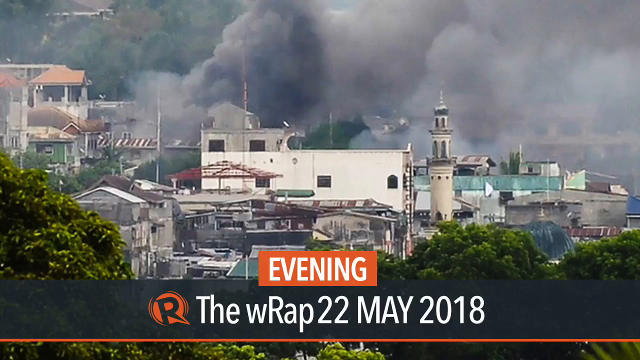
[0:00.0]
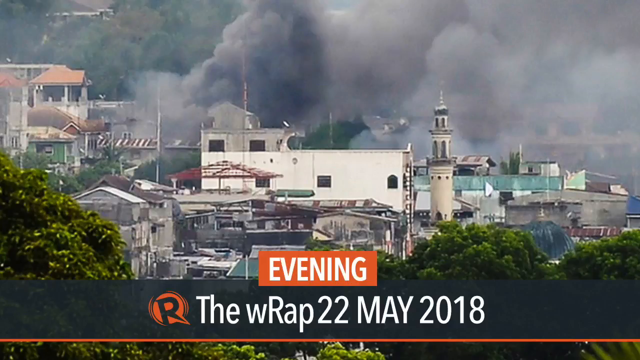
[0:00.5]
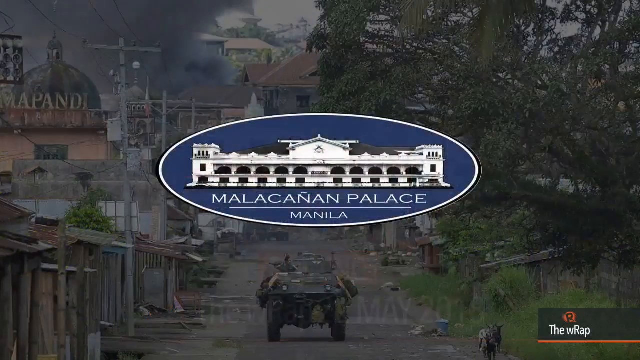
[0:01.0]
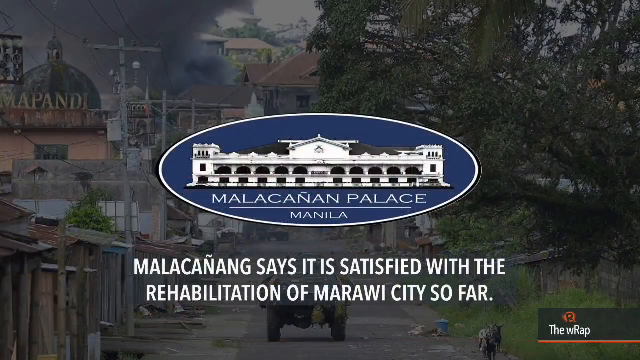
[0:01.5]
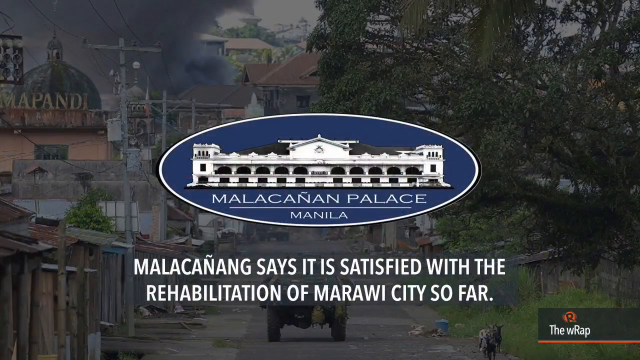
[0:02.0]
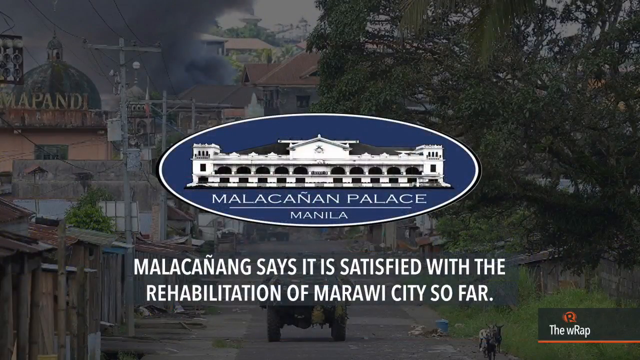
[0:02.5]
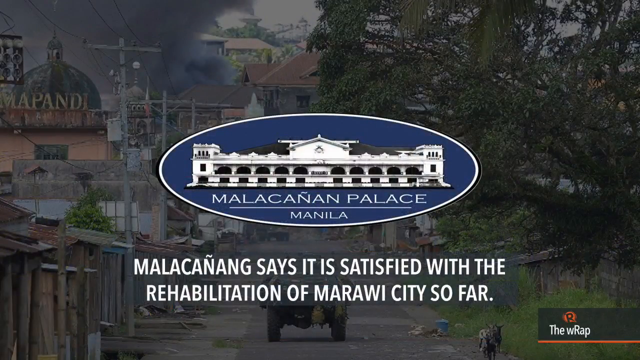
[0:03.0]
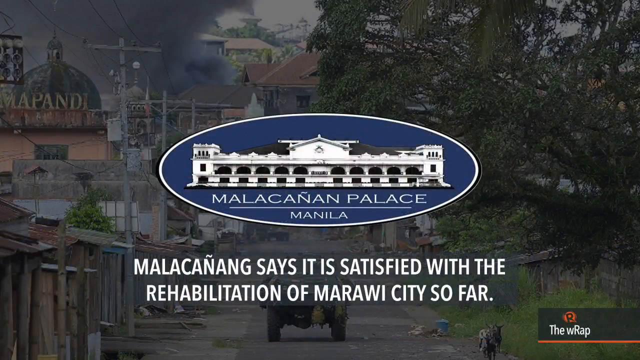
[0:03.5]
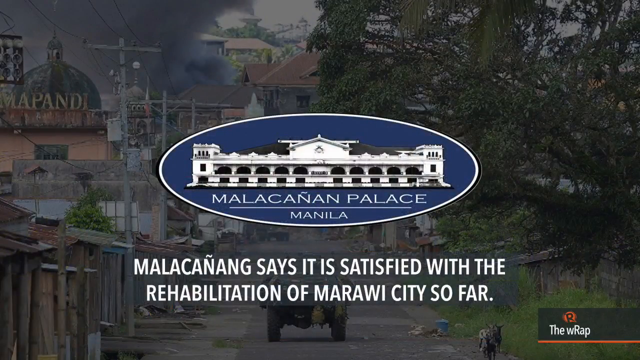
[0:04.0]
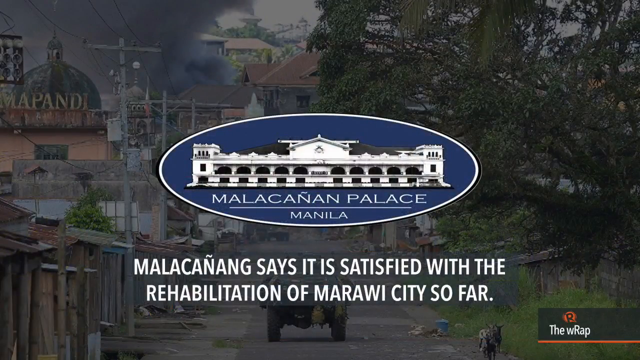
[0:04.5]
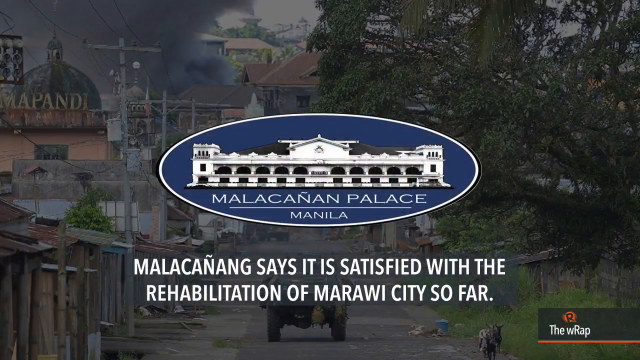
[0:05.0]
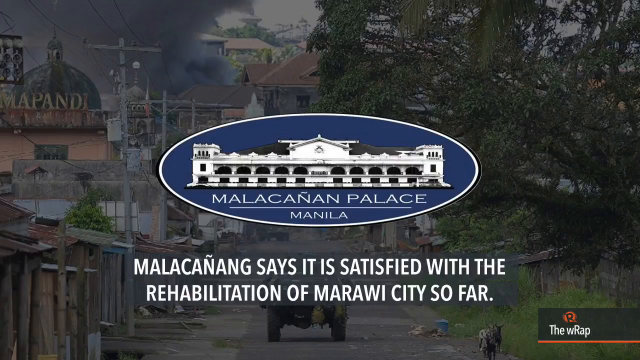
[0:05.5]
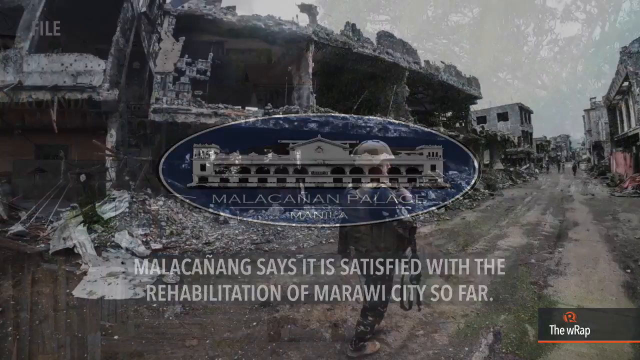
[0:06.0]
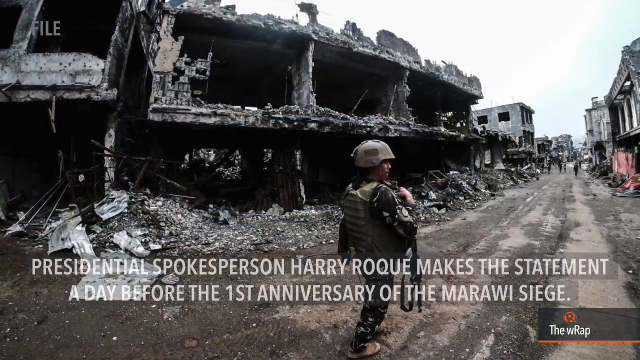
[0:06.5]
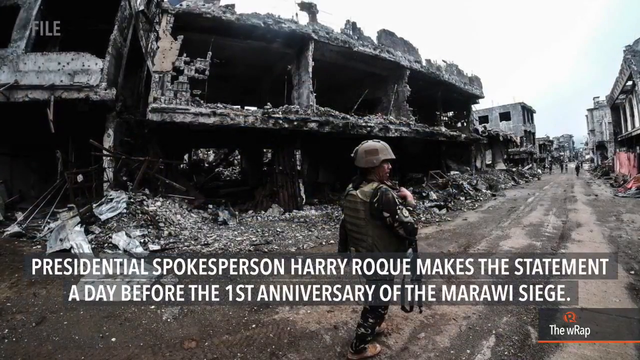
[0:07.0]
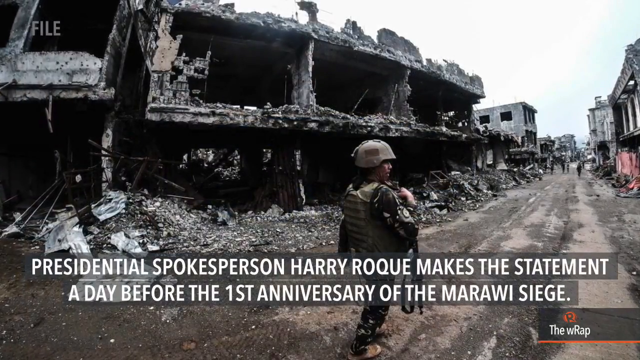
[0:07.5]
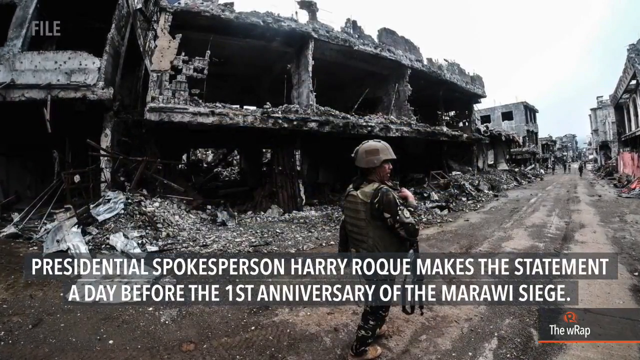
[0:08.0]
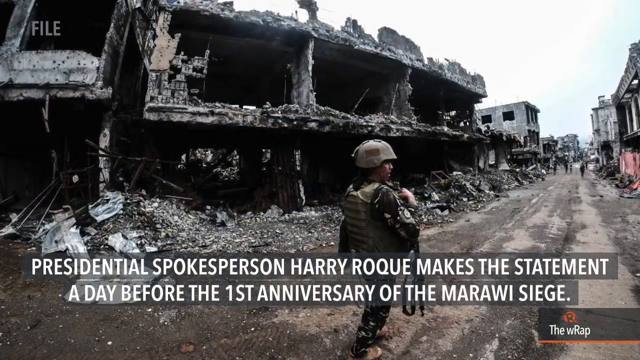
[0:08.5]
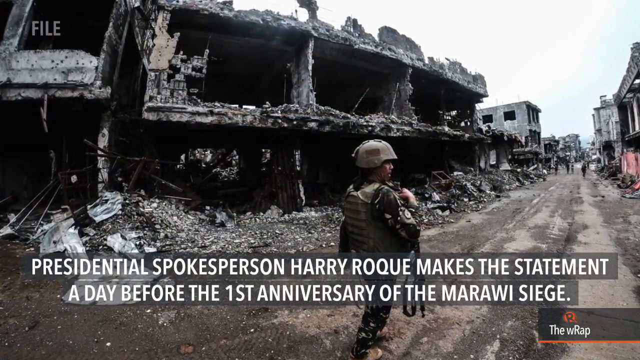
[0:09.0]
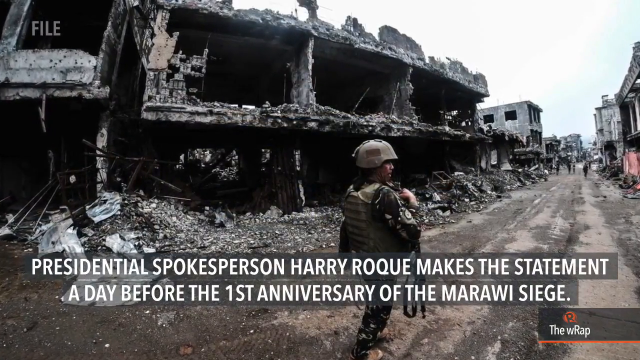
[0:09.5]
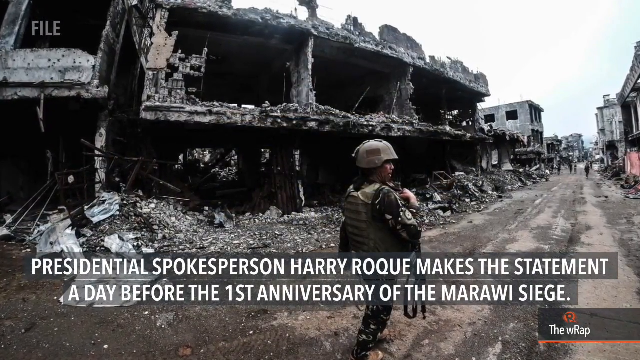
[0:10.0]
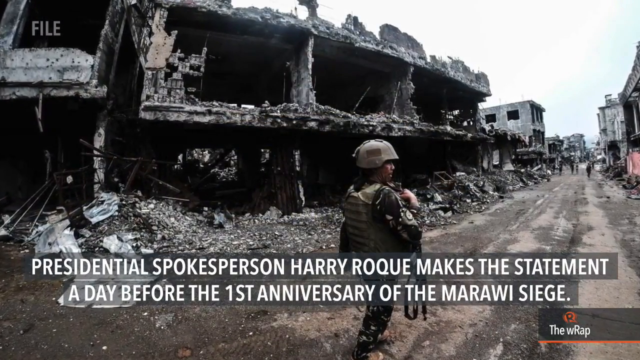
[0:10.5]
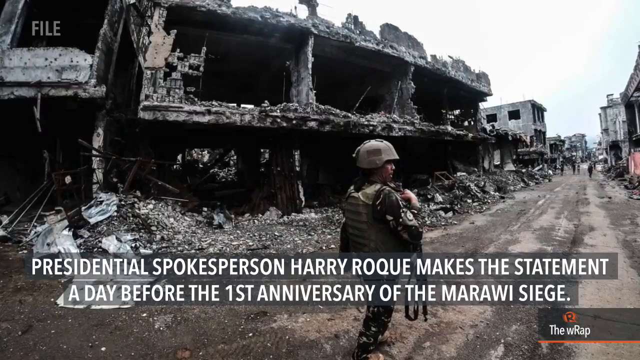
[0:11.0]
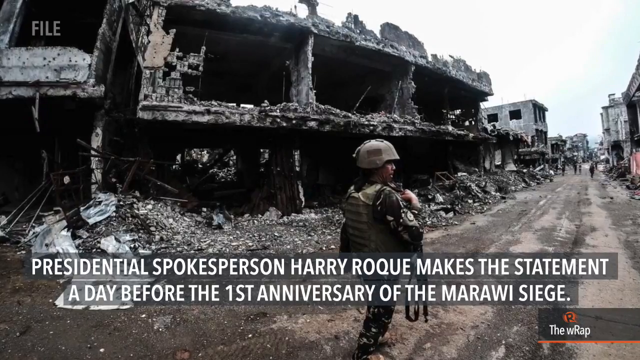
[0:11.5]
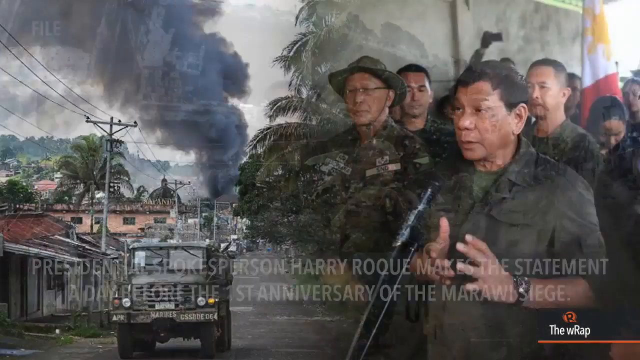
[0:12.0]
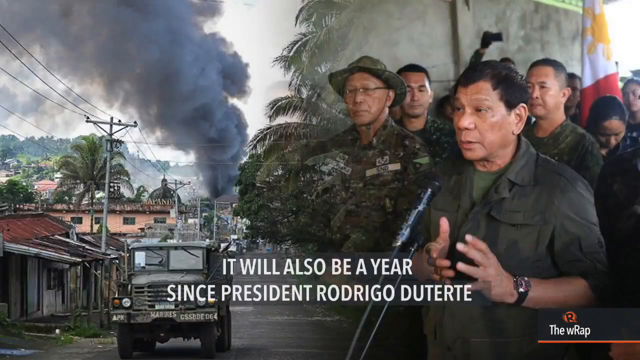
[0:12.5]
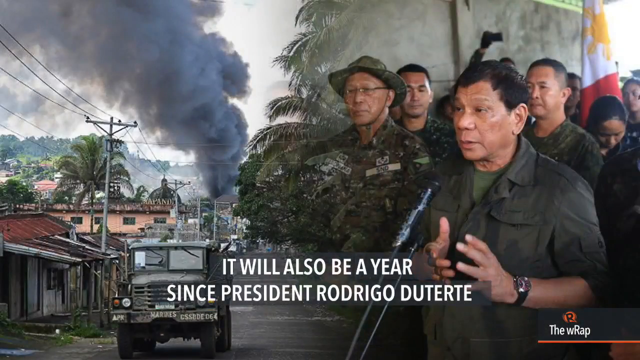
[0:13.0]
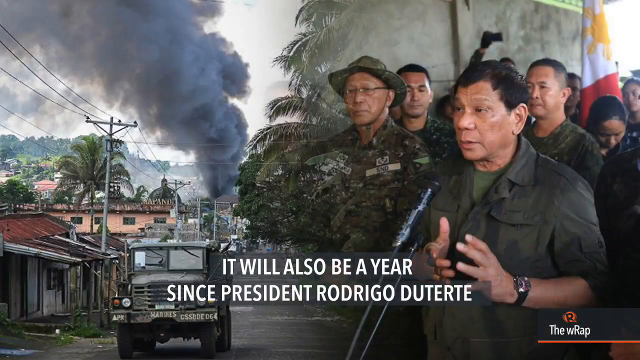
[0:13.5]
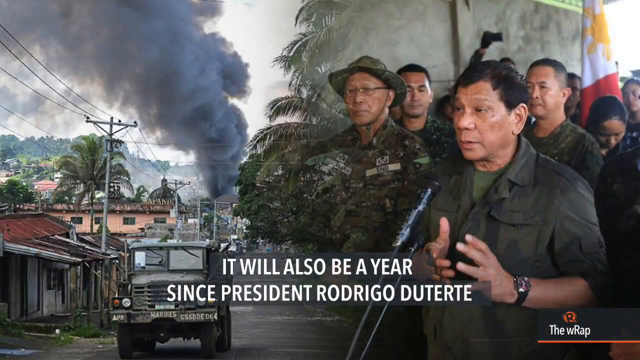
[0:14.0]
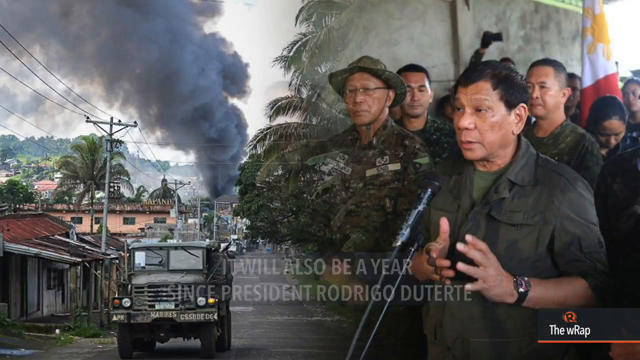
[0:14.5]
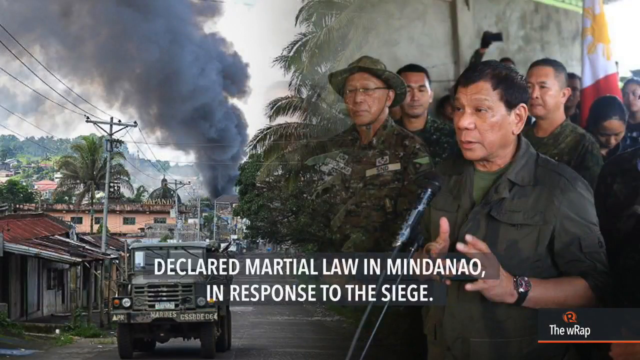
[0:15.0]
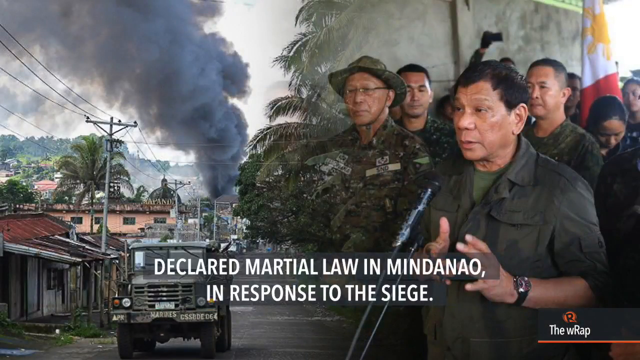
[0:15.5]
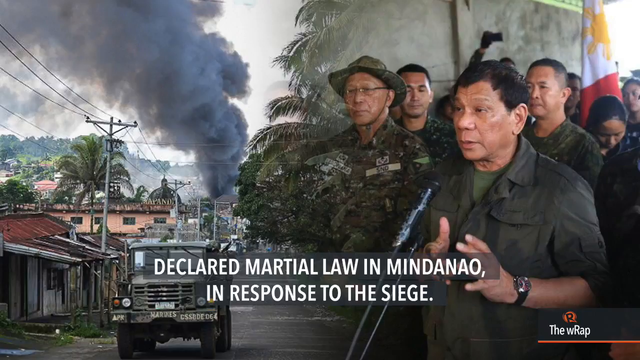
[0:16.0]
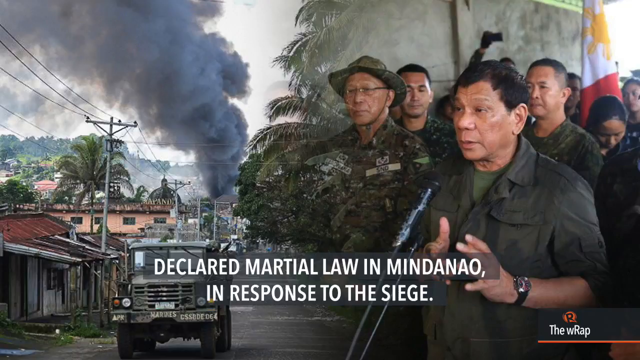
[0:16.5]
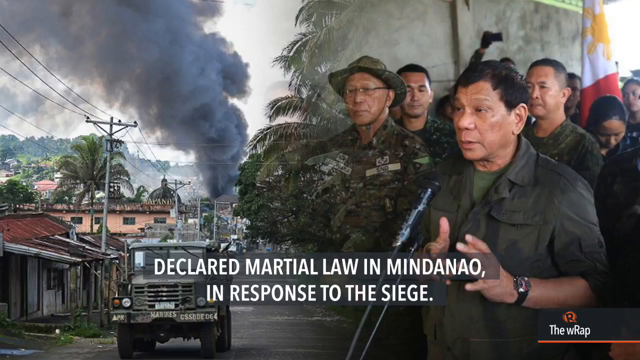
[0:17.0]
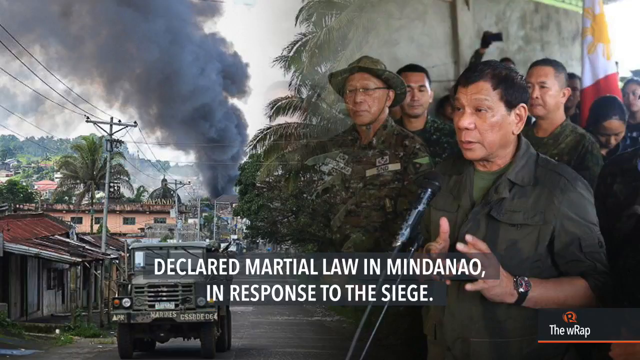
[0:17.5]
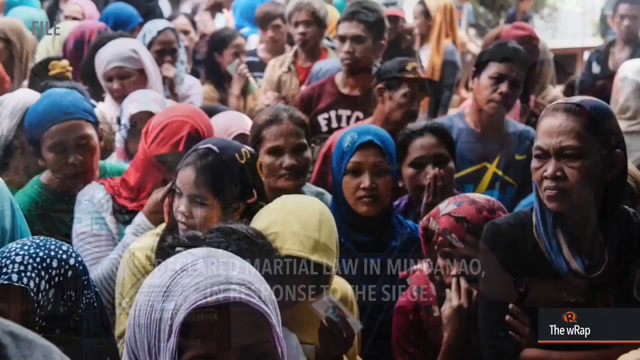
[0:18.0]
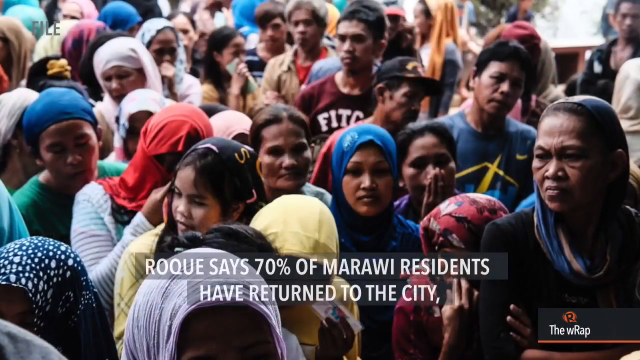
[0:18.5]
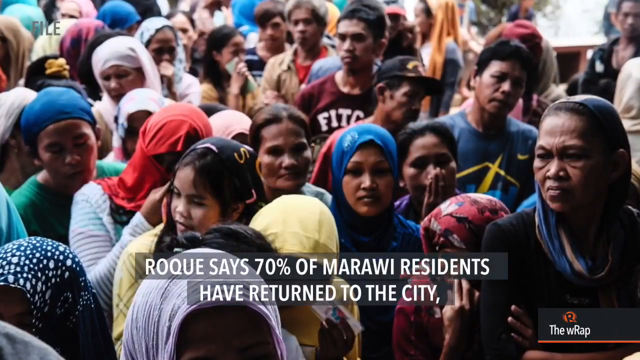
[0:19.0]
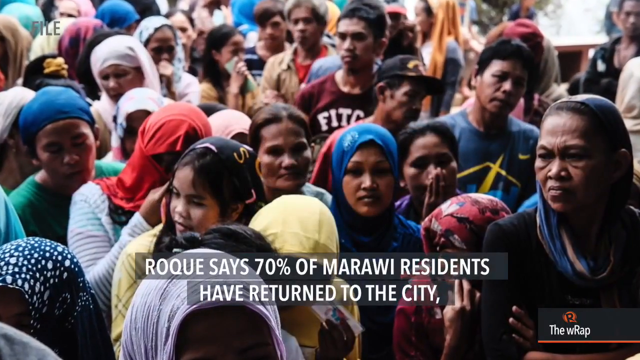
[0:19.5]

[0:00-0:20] Green trees and some buildings appear, and then some buildings are being destroyed by fire. Soldiers, a large group of people, gases and Indians are also shown. There is green vegetation along with white buildings and blue buildings. What looks like smoke is coming out of the houses. Text written in white and underlined with orange includes the date "22 May 2018".